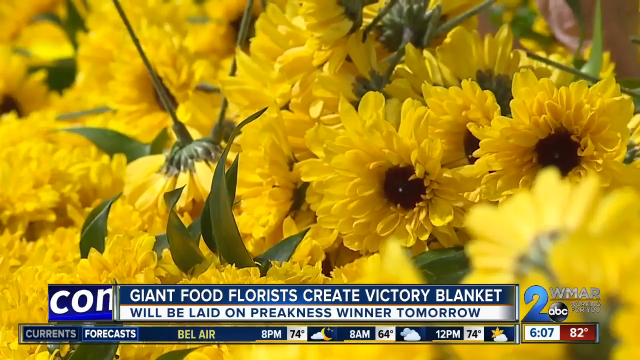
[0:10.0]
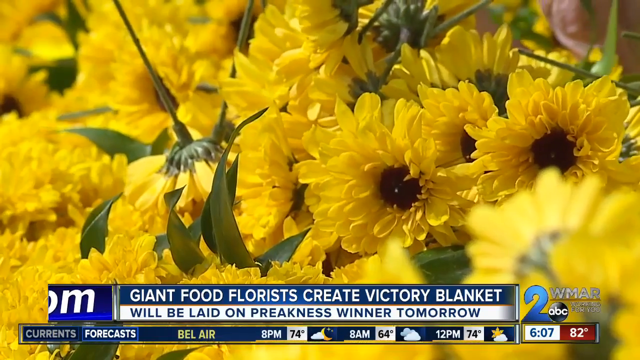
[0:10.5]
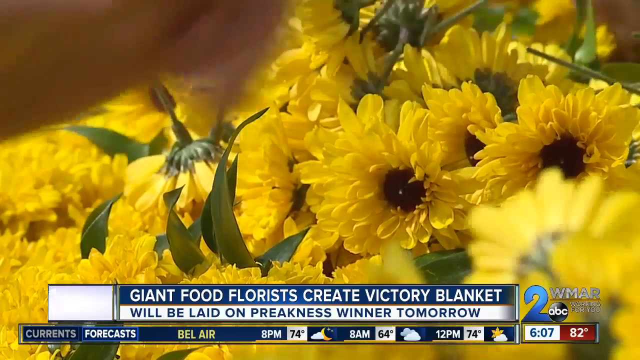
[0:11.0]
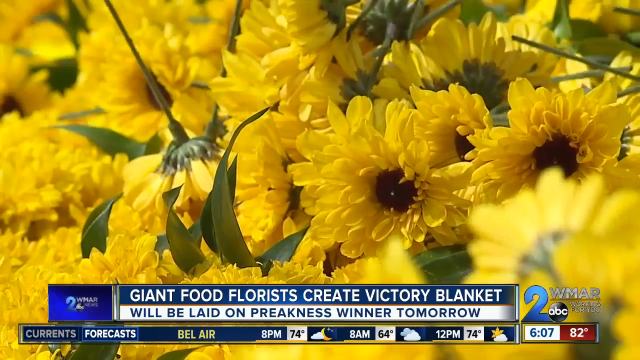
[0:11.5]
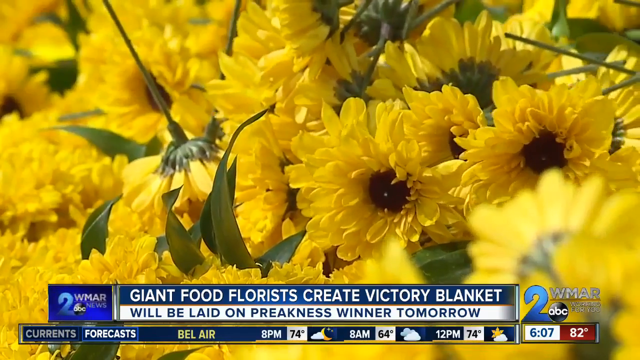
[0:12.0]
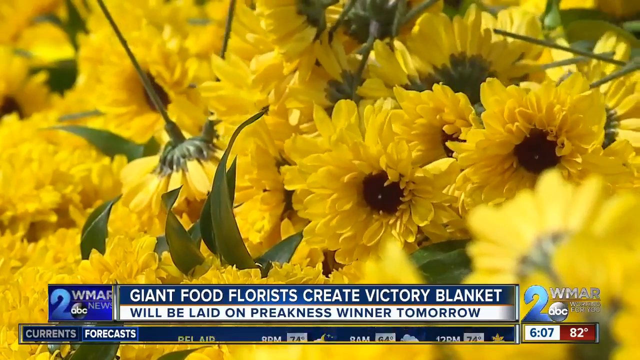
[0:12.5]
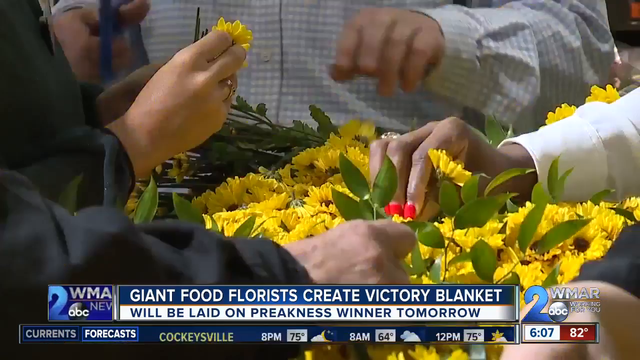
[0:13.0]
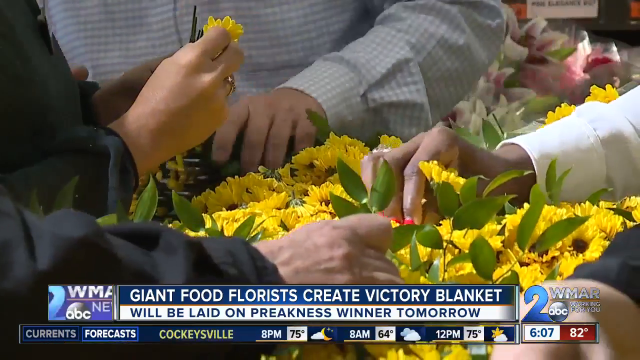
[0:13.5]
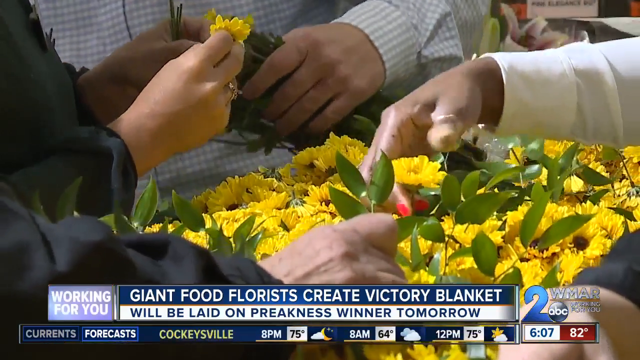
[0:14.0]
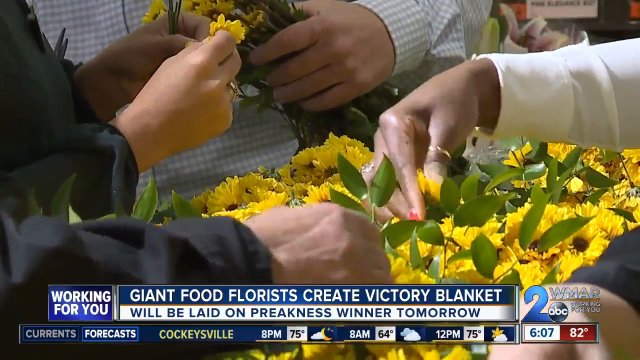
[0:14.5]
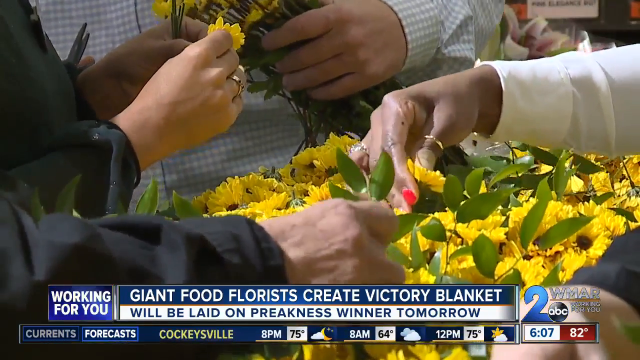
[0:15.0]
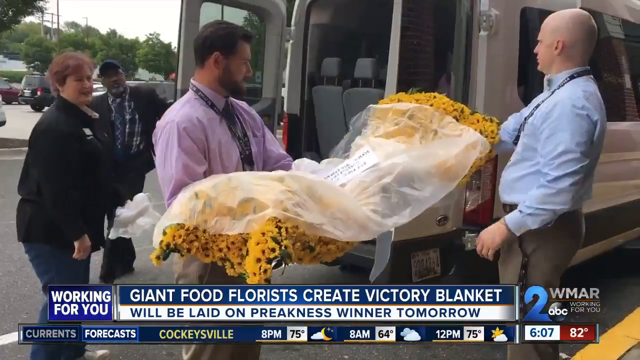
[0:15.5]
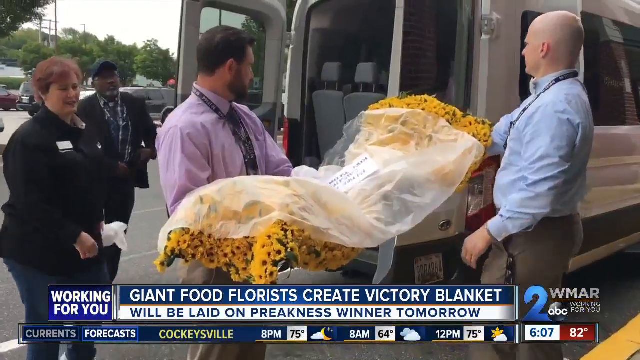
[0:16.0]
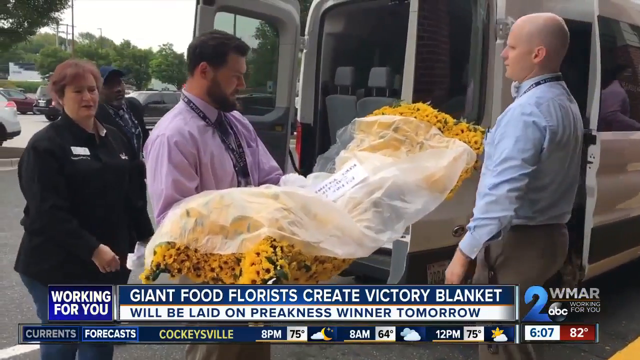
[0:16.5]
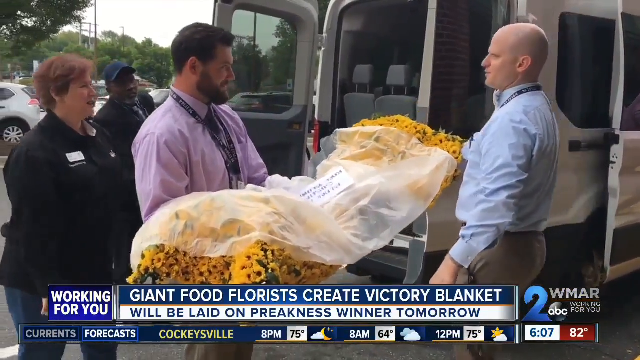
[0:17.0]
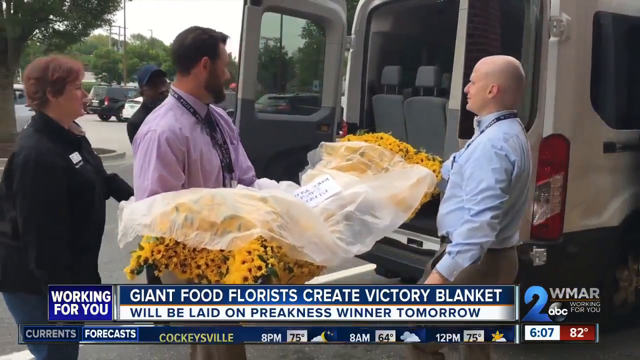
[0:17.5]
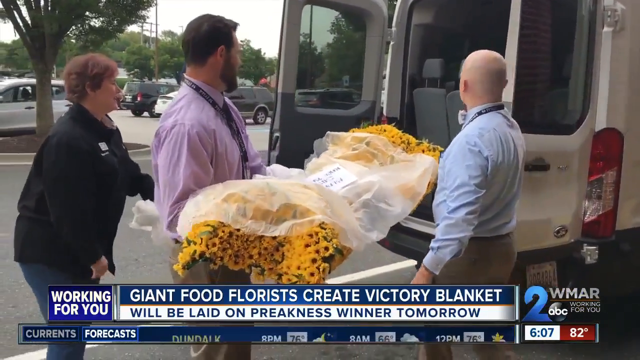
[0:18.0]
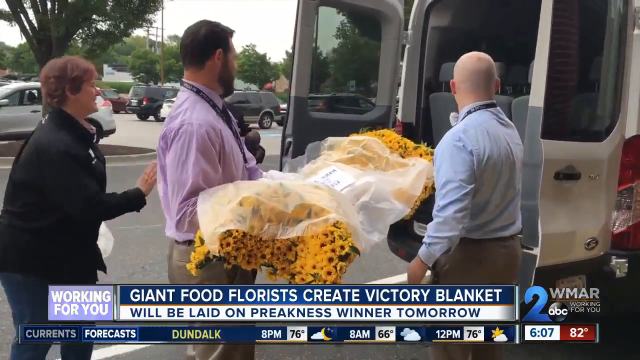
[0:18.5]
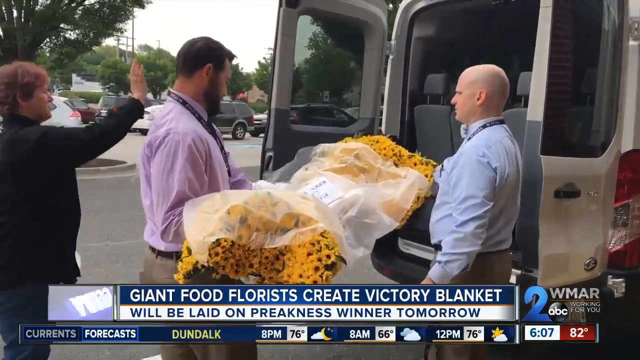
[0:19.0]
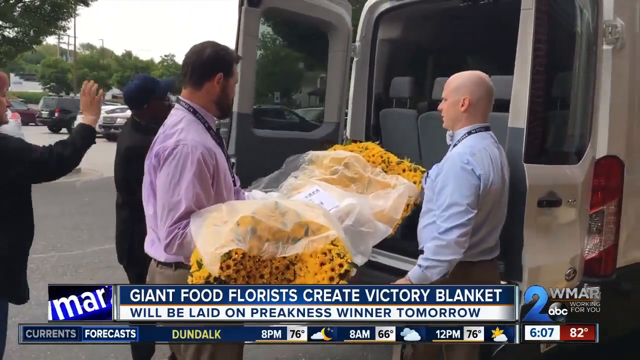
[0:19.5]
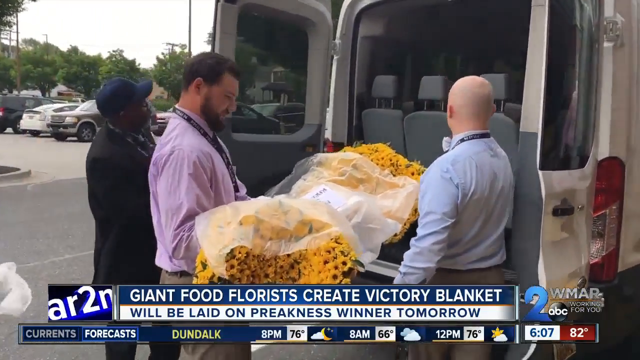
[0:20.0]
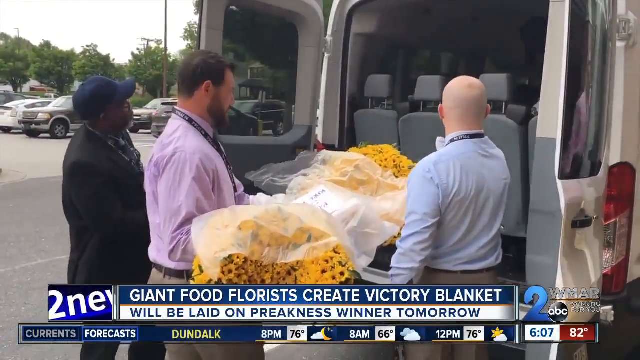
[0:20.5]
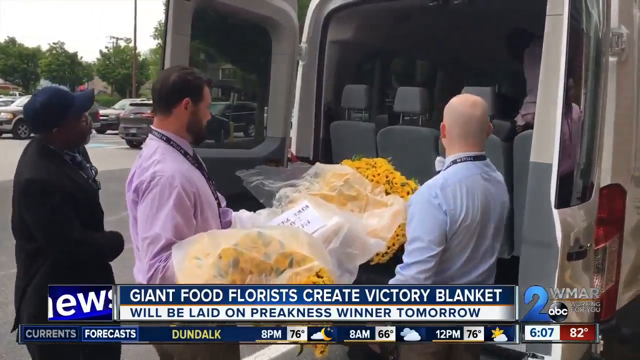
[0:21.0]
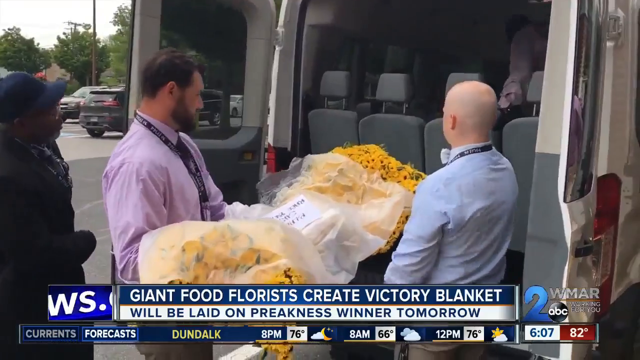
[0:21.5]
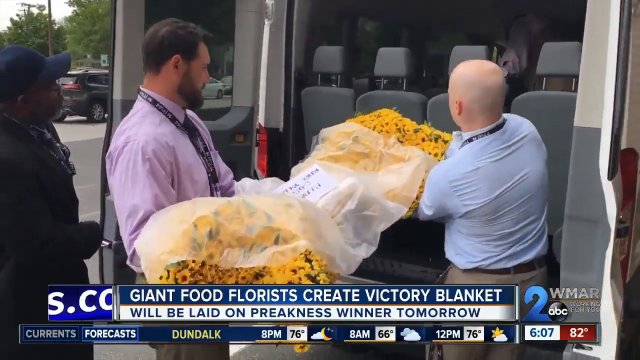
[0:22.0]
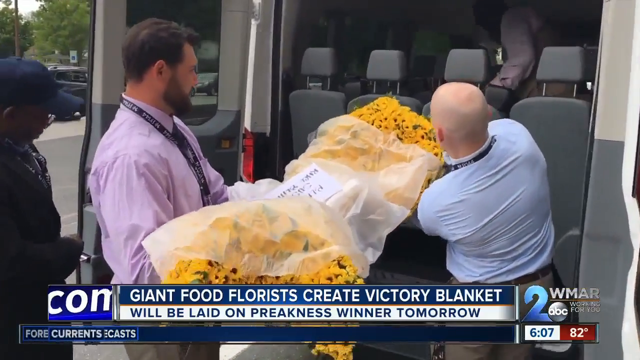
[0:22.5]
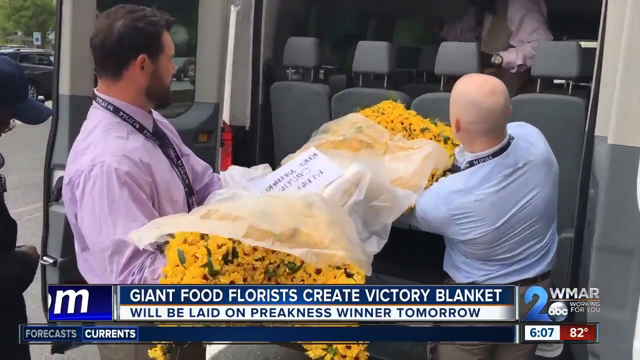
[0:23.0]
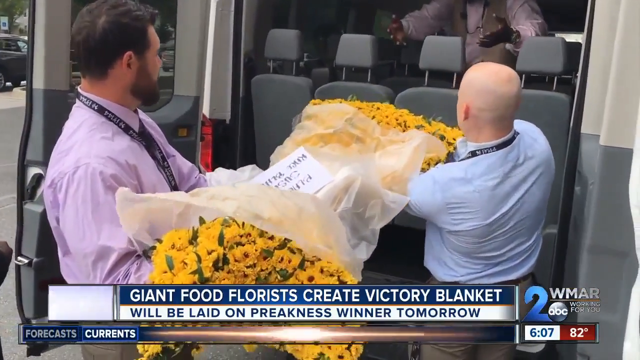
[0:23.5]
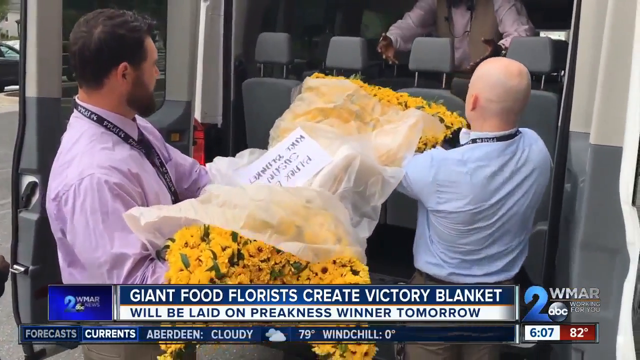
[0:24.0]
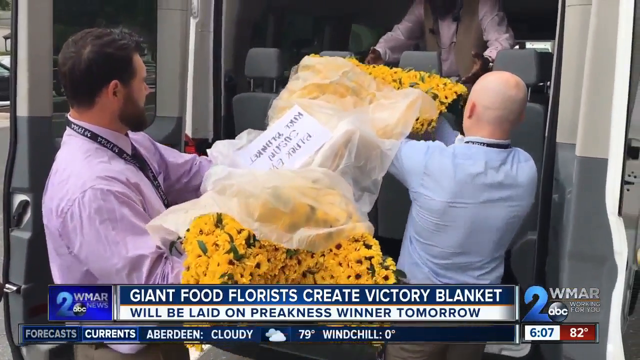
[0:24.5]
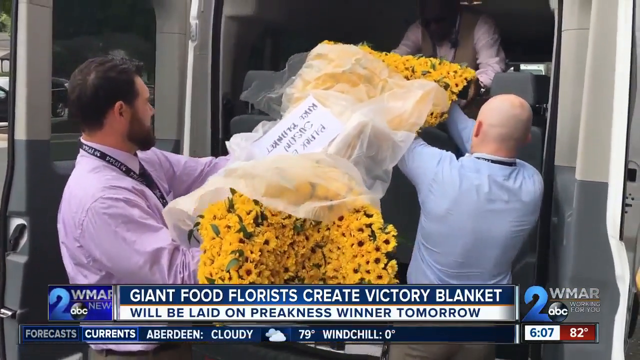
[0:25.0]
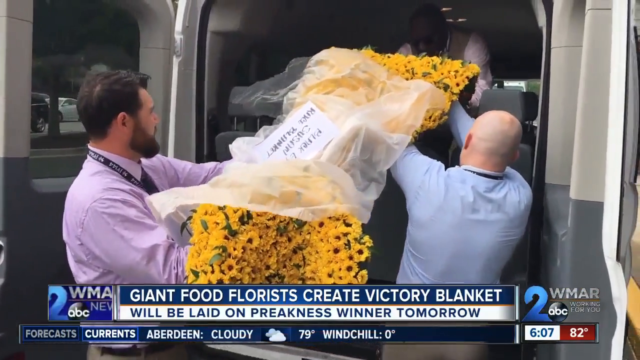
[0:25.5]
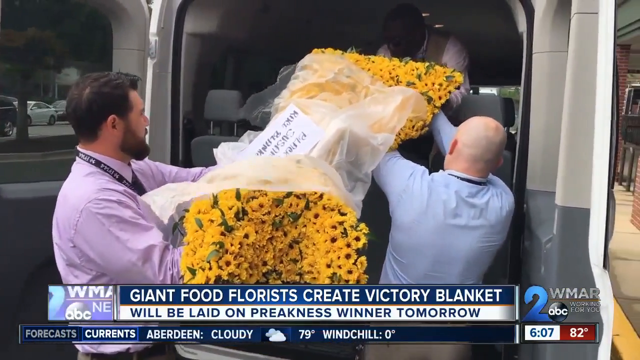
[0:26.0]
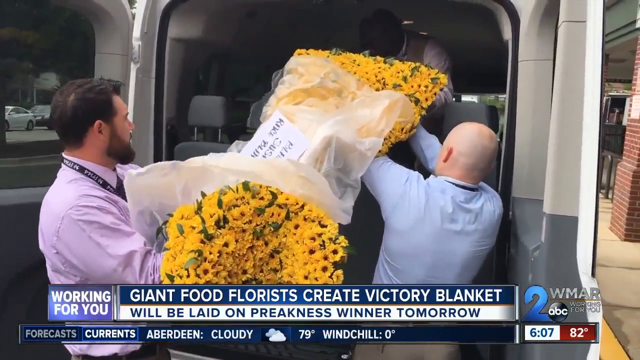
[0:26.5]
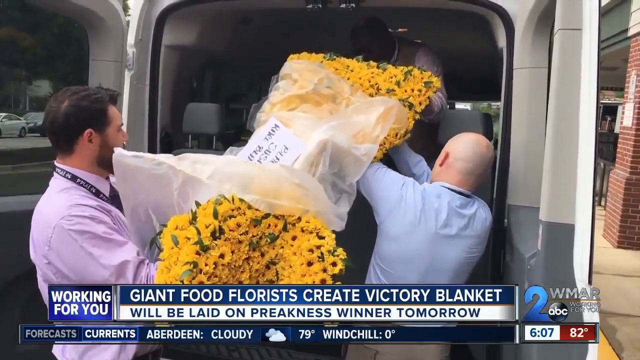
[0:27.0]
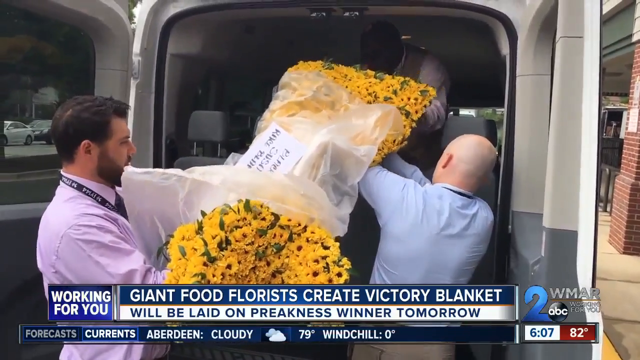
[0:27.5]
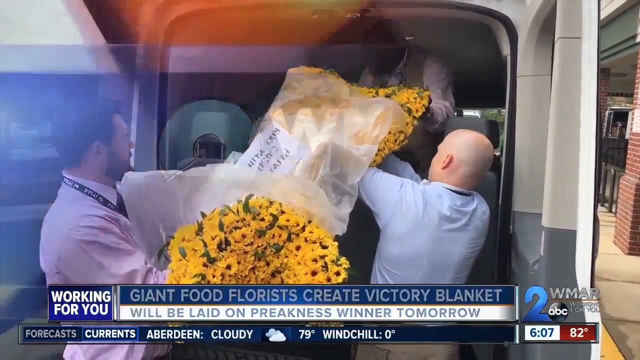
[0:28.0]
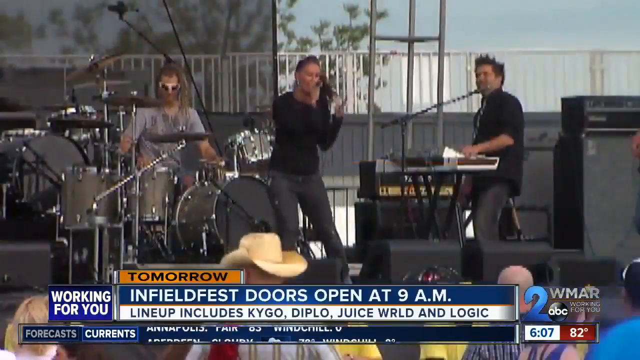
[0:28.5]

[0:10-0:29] Flowers, including yellow flowers, are shown as the florists work on the giant food florist victory blanket, a very large, kind of blanket-looking floral decoration for a specific event, in WMAR ABC news coverage. The screen then transitions to an individual in a sort of band-like setting and then to a live performance, with text reading "open at 9 a.m lineup includes CYGO, Juice WRLD, and Logic". The giant food flower victory basket is shown, and two men carry it into the back of a van before the news portion ends.